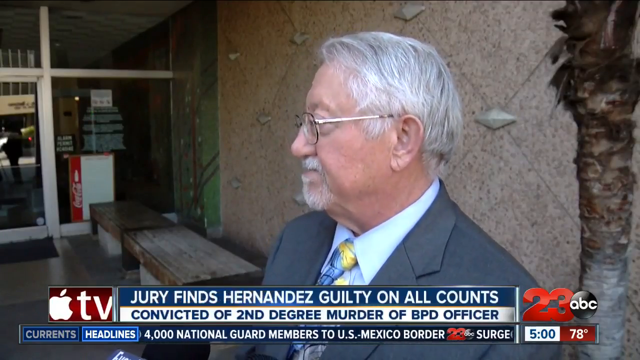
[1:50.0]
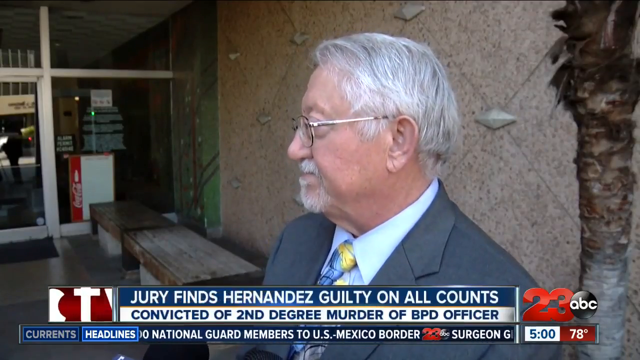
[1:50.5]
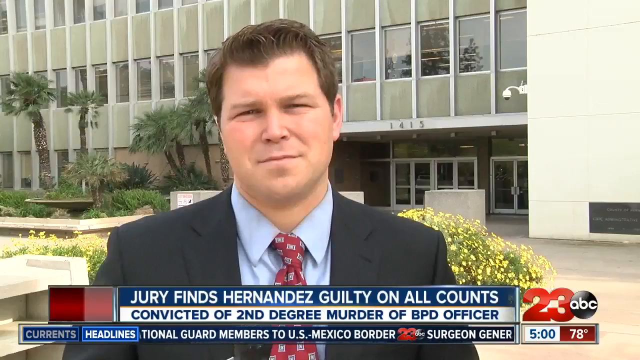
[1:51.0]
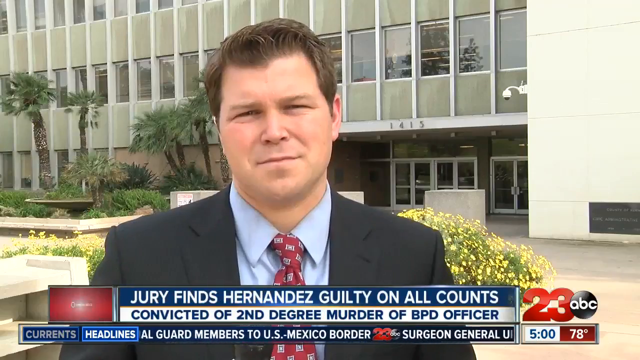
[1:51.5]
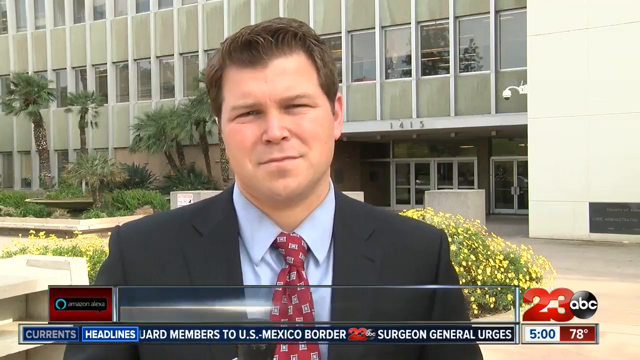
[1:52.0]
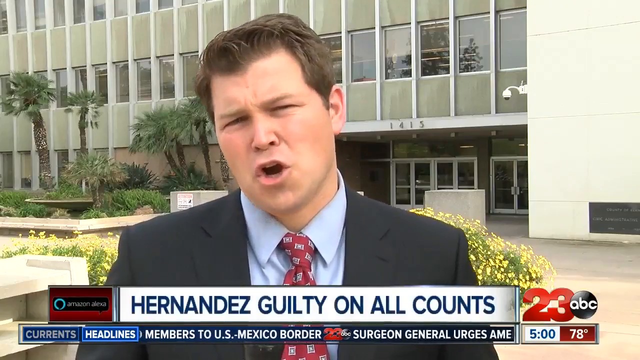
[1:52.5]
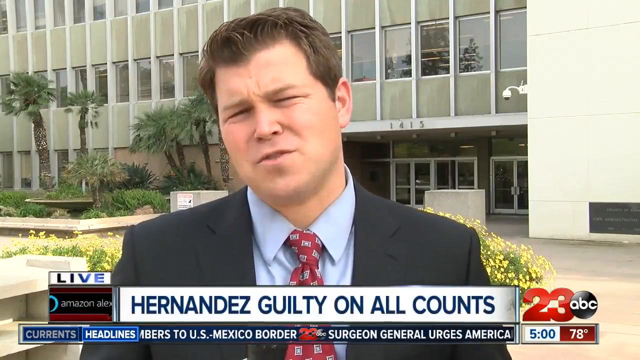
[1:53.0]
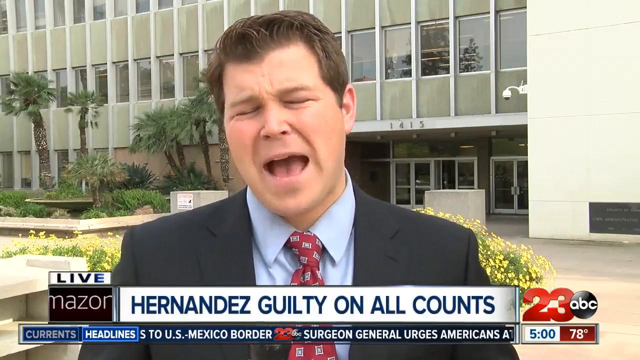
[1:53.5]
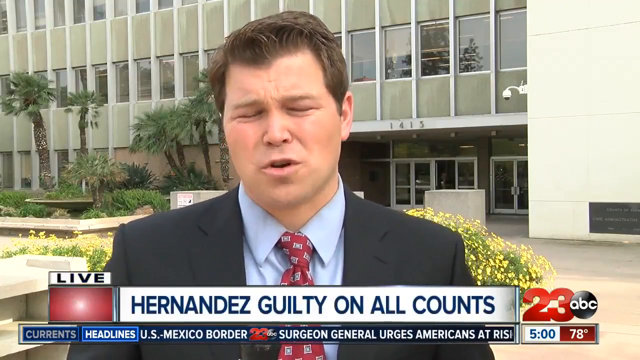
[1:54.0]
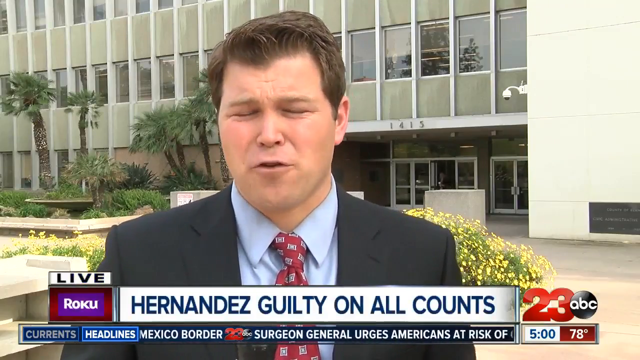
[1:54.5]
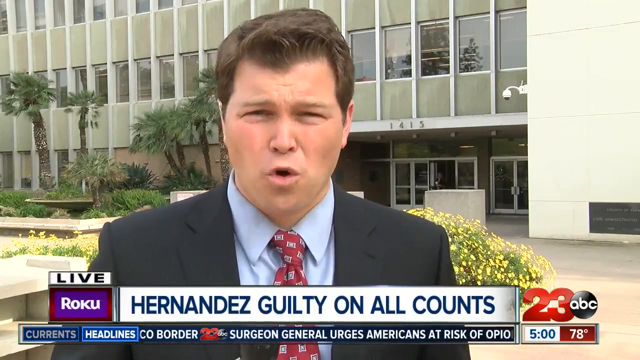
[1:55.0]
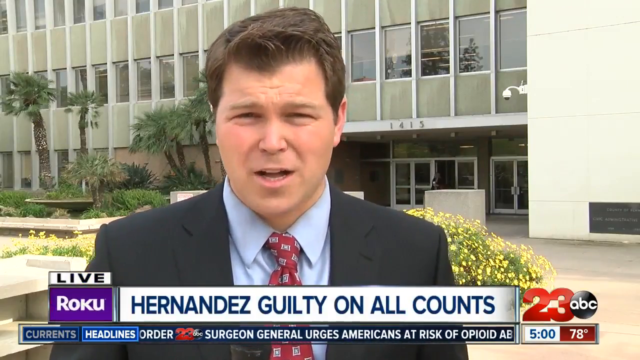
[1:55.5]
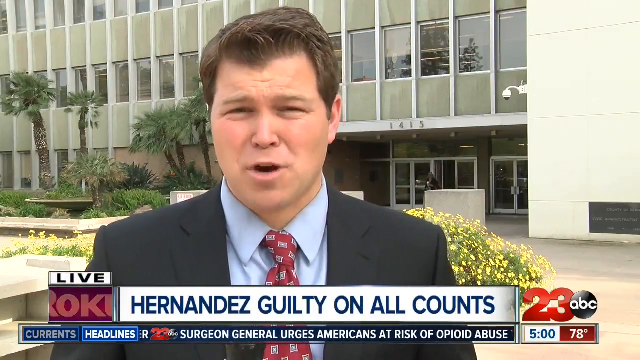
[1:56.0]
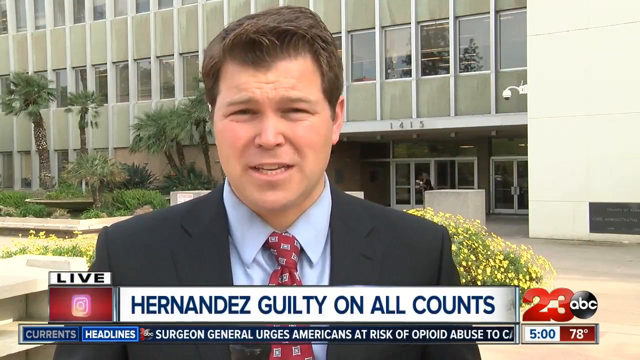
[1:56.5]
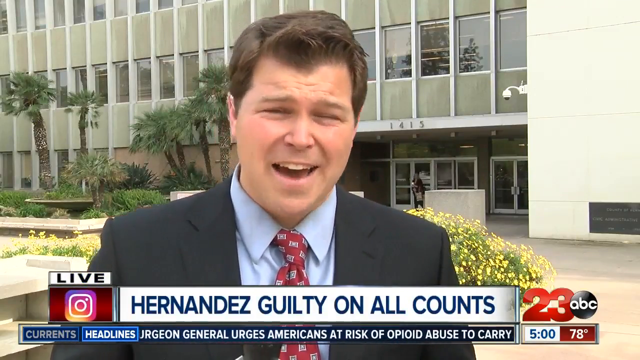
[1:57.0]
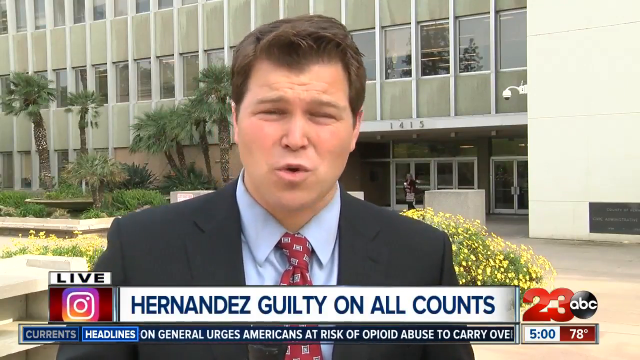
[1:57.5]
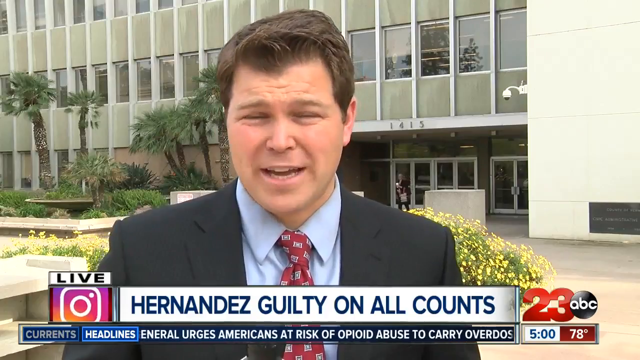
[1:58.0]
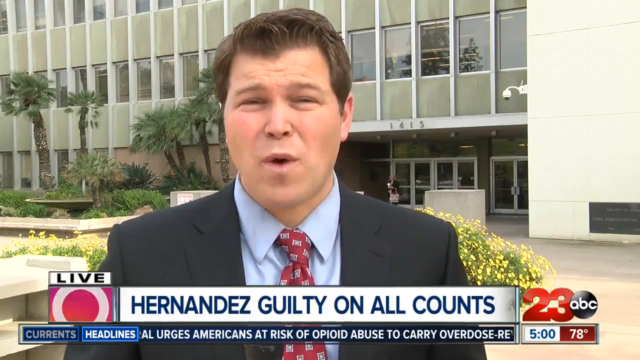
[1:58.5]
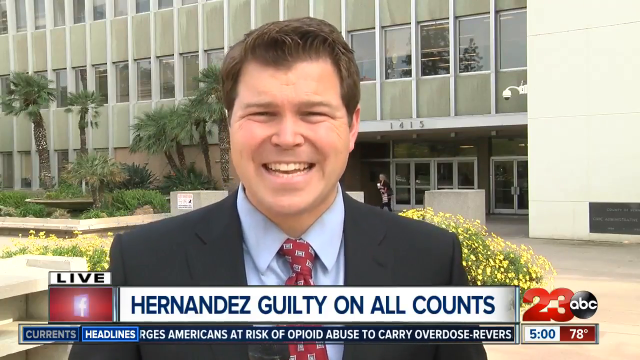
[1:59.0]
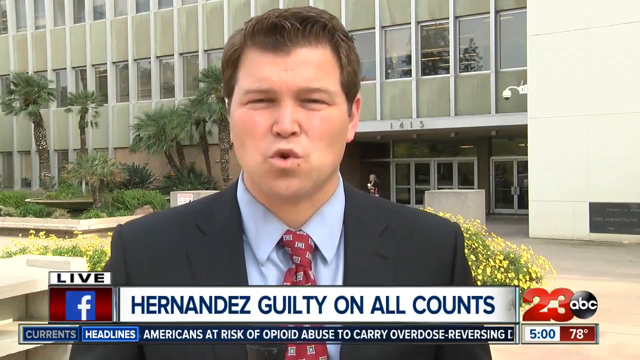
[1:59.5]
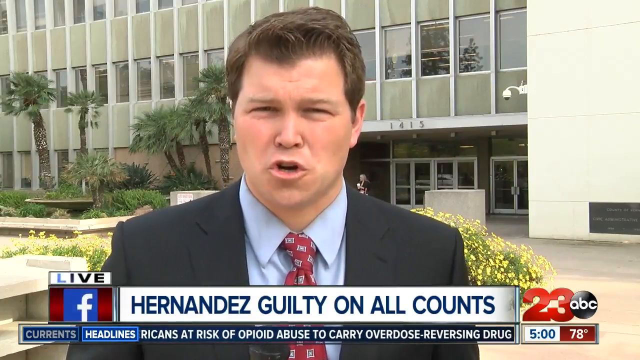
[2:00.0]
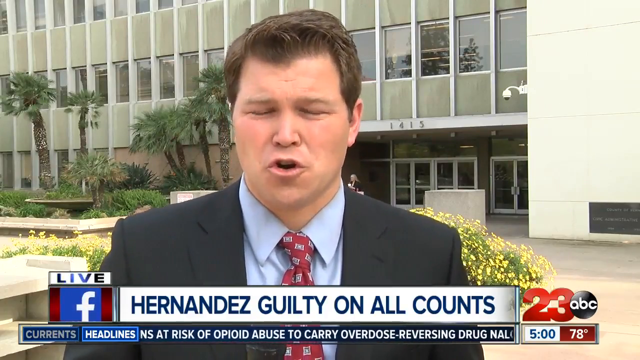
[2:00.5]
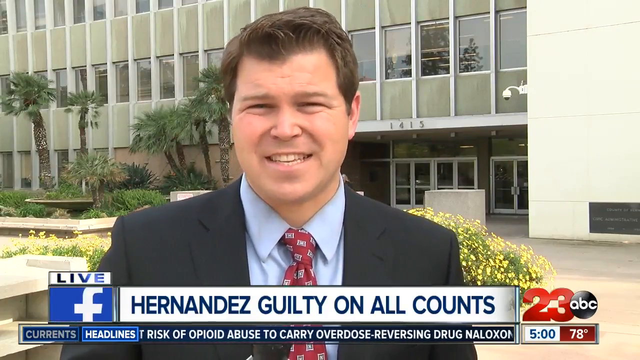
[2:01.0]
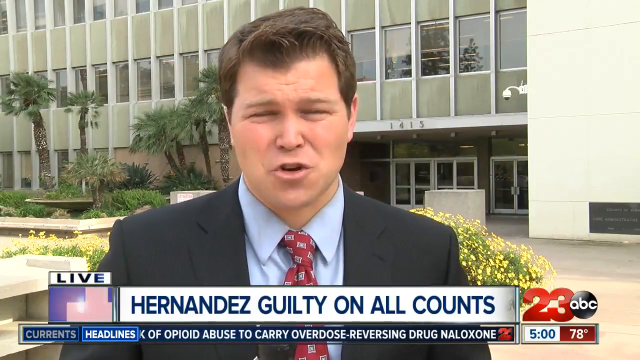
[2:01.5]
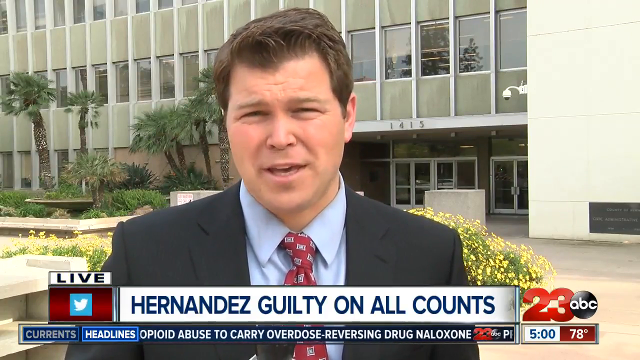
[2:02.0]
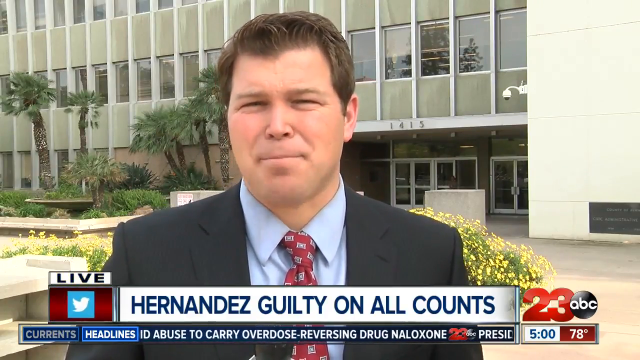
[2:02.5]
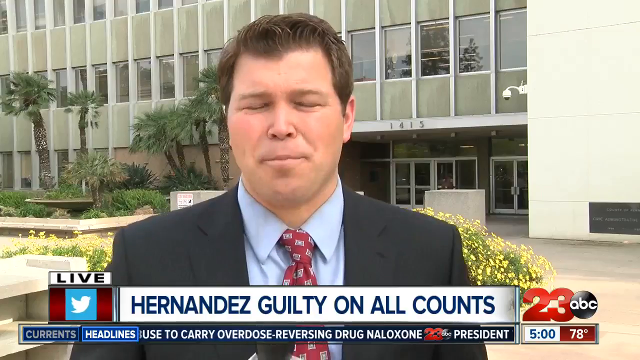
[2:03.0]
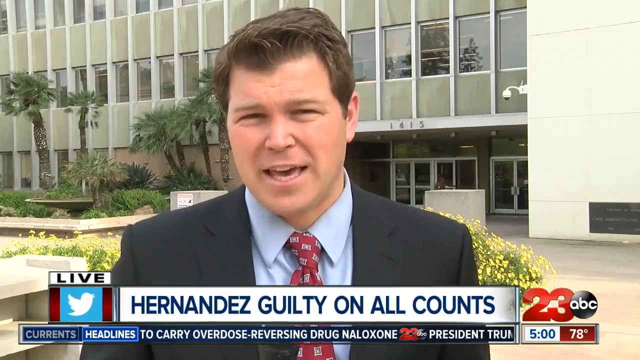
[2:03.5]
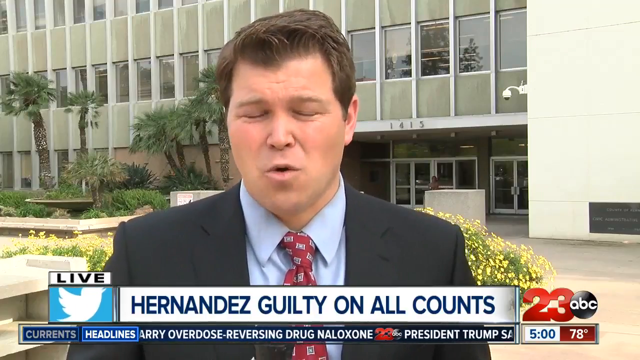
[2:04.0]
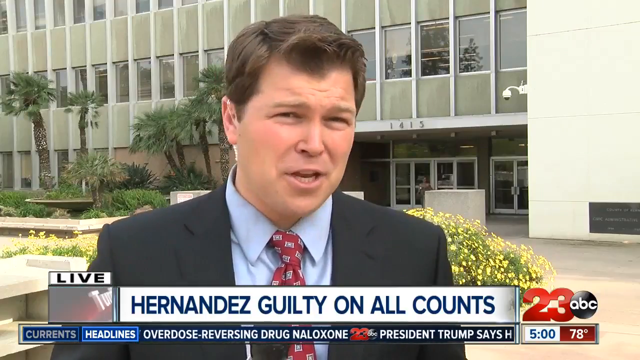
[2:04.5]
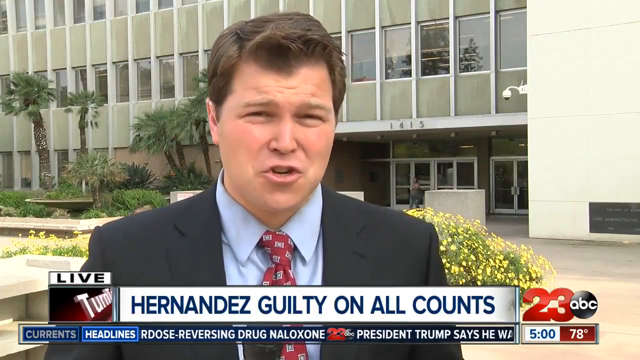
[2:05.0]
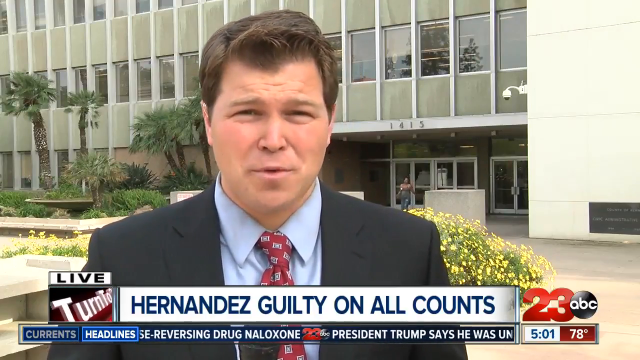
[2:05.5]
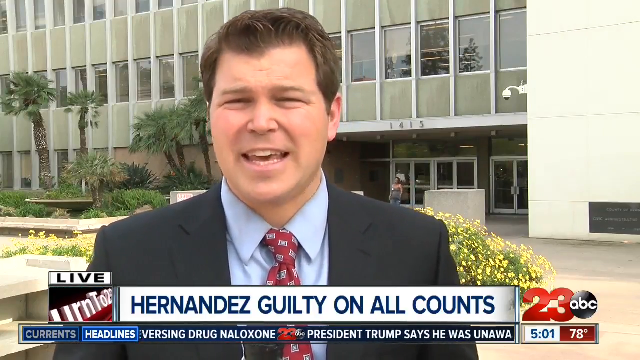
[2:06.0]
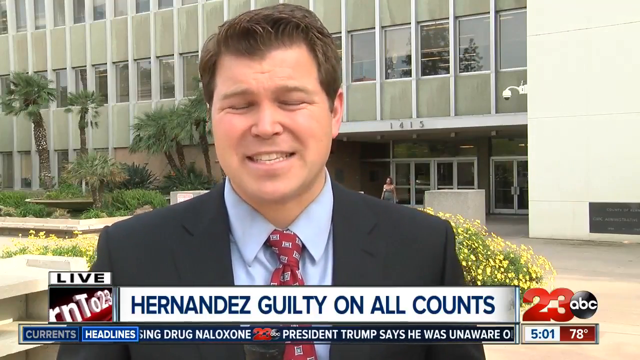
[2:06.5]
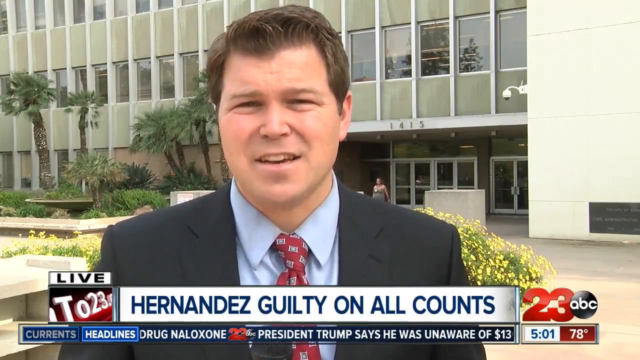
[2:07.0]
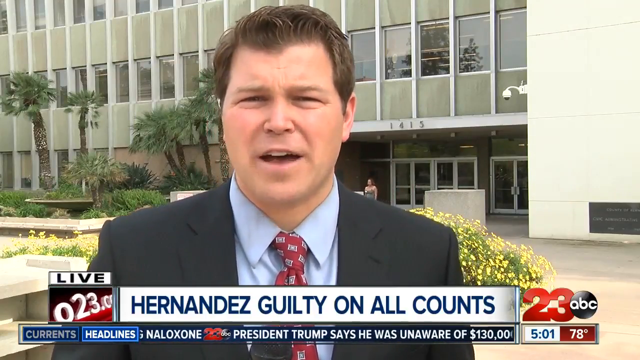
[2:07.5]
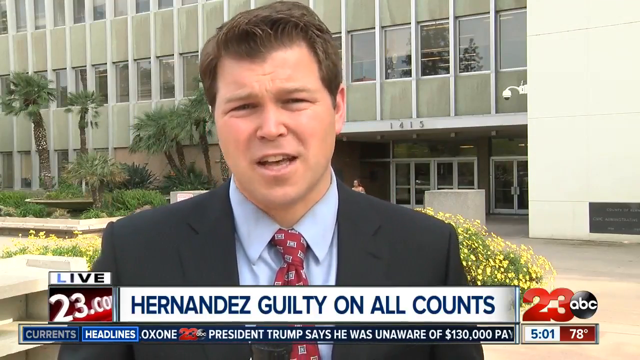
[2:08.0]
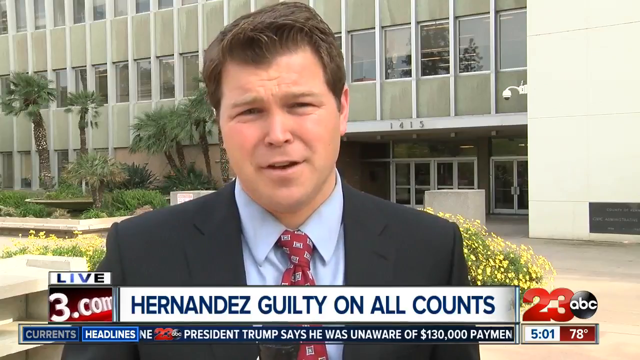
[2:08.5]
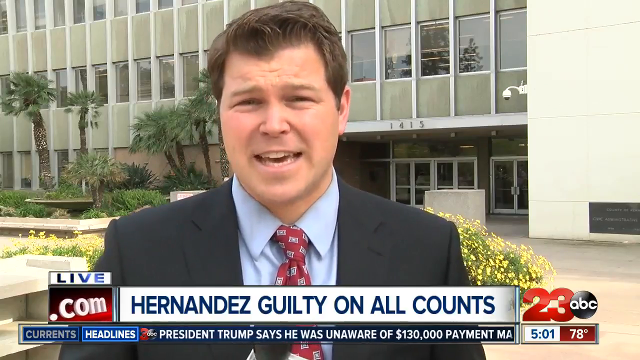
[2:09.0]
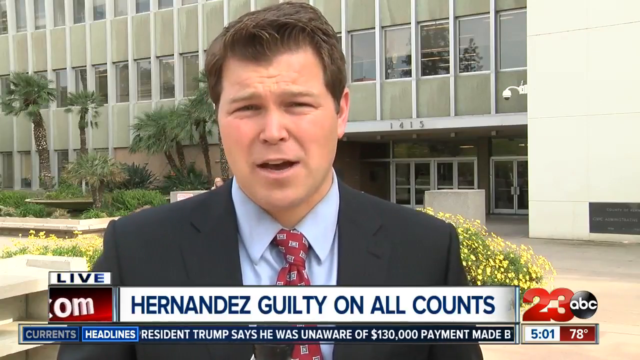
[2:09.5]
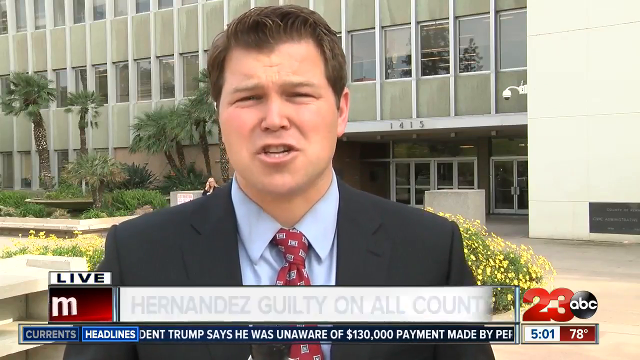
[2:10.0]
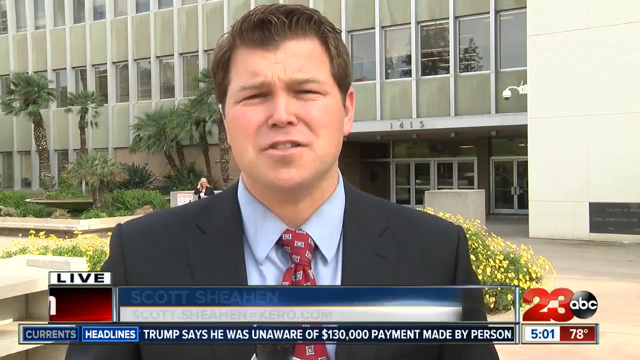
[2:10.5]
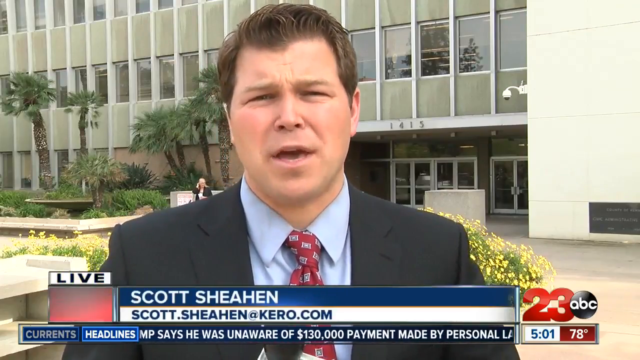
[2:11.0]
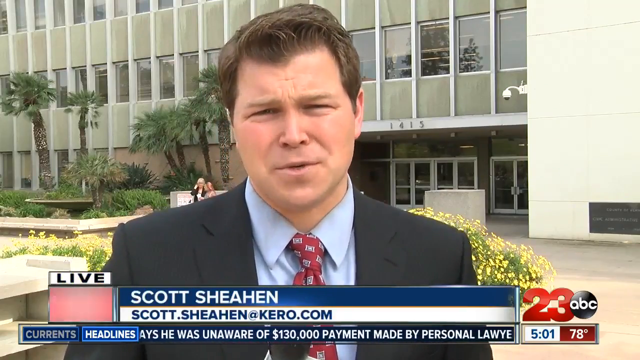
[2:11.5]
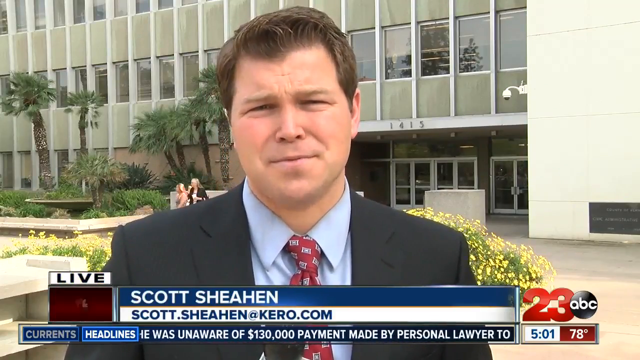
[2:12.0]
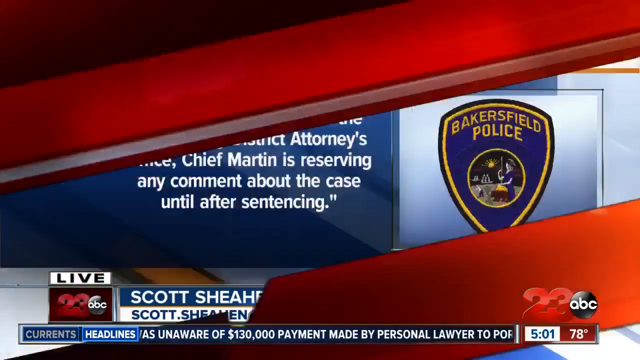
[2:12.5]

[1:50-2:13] The headline still reads "Jury finds Hernandez guilty on all counts." After defense lawyer Ronald Carter finishes talking, the broadcast returns to the 23ABC reporter, Scott Sheath, who wraps up the story.